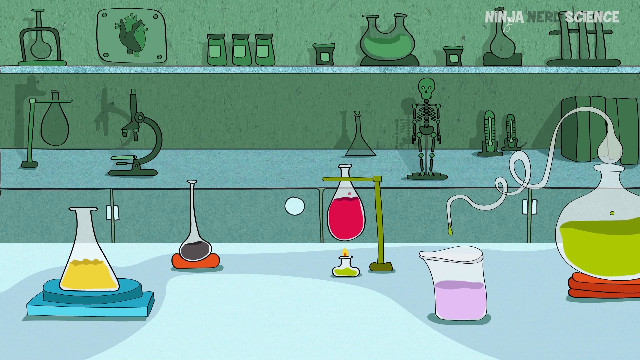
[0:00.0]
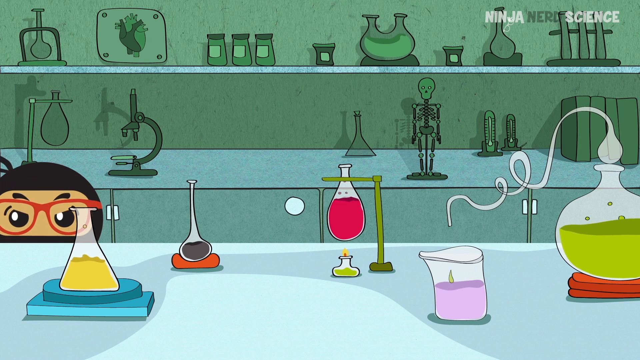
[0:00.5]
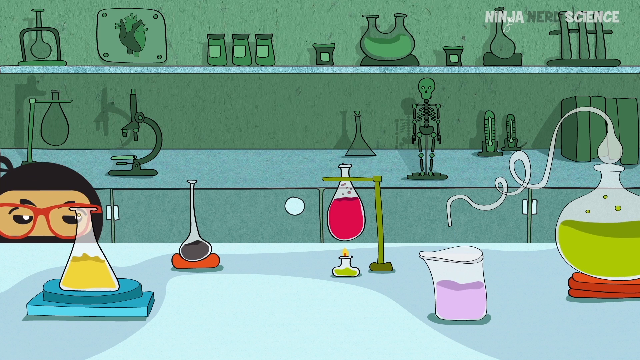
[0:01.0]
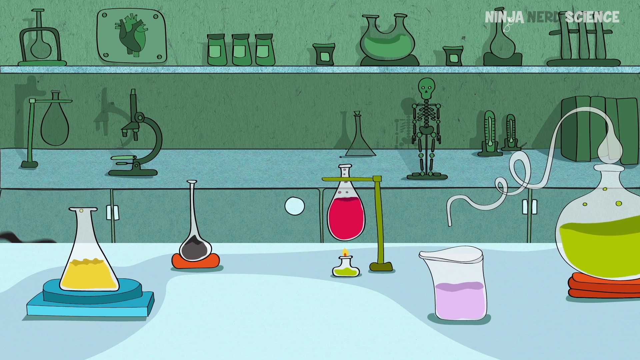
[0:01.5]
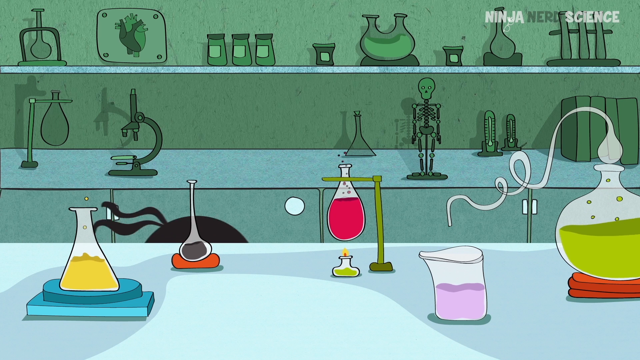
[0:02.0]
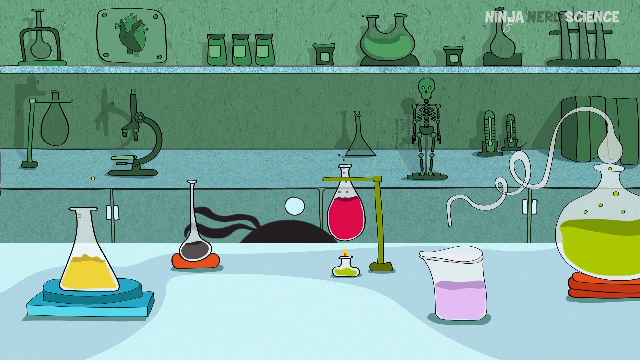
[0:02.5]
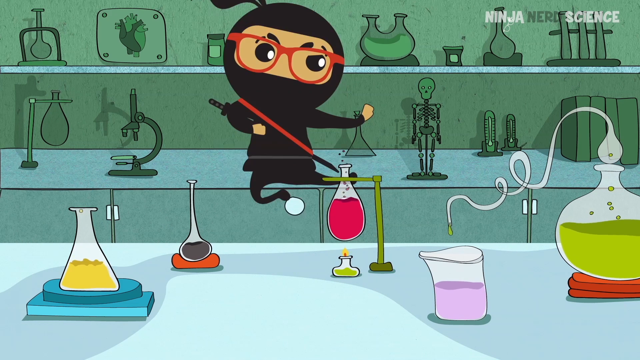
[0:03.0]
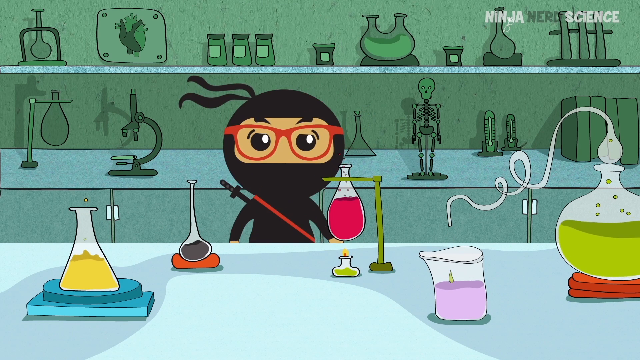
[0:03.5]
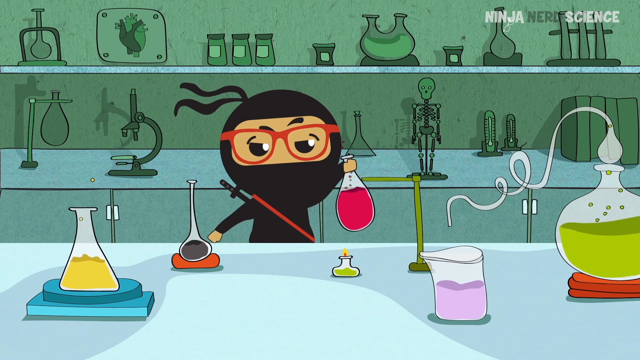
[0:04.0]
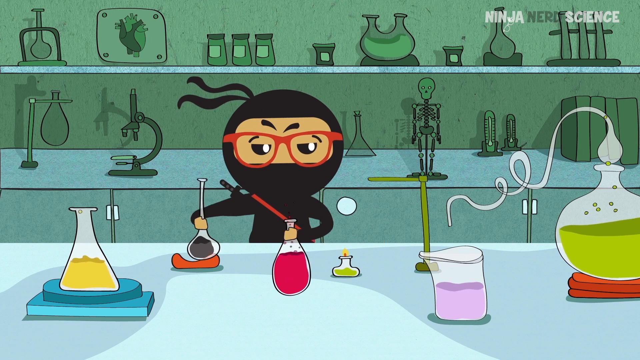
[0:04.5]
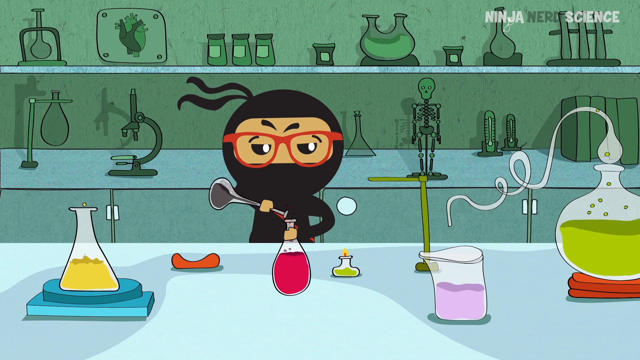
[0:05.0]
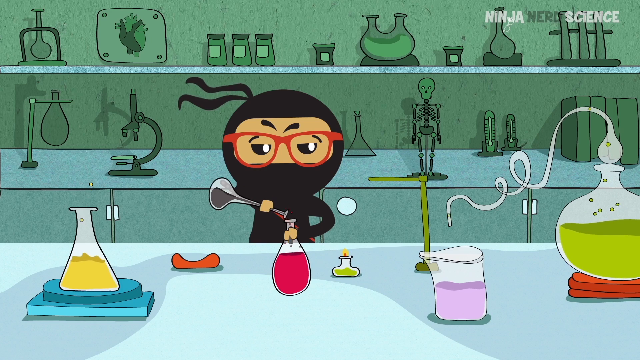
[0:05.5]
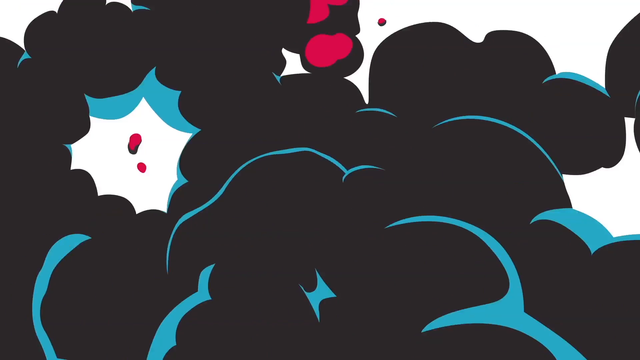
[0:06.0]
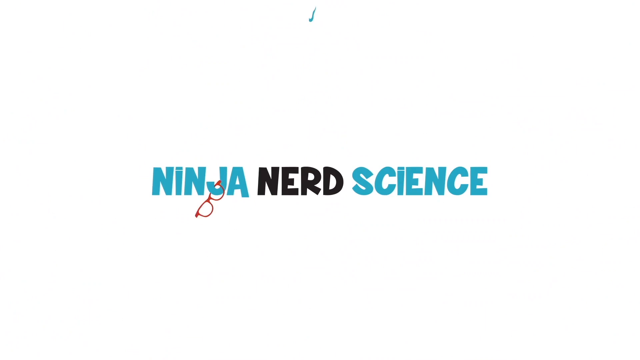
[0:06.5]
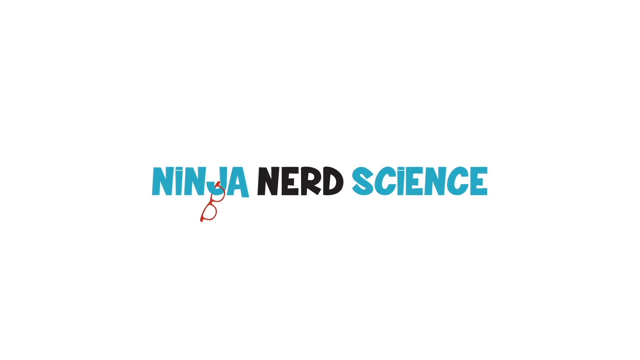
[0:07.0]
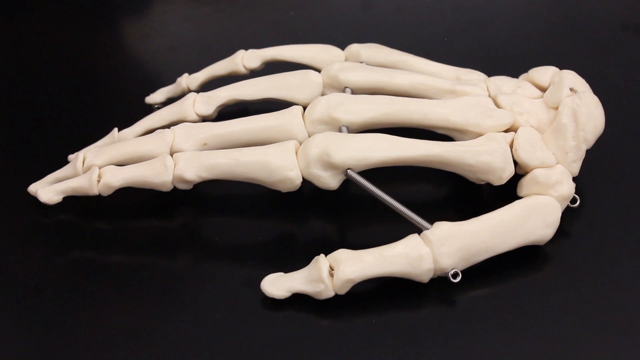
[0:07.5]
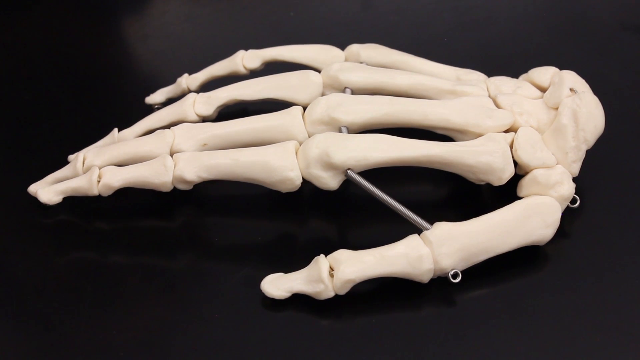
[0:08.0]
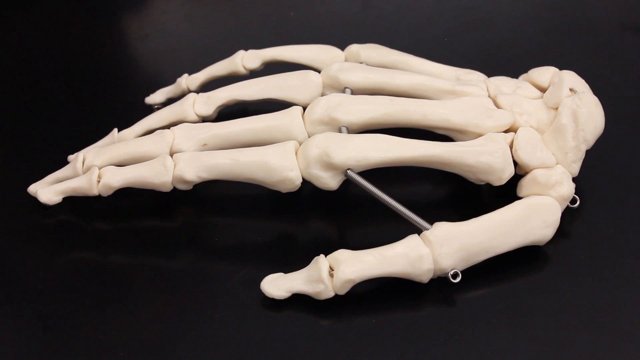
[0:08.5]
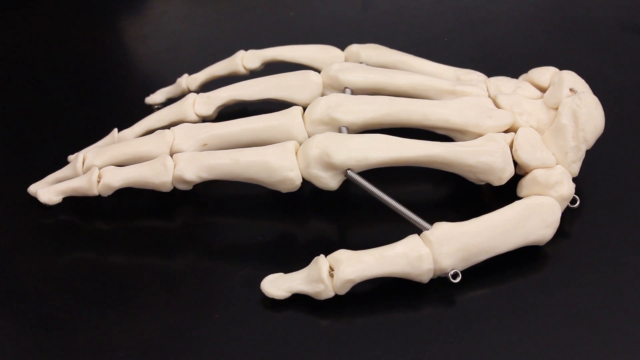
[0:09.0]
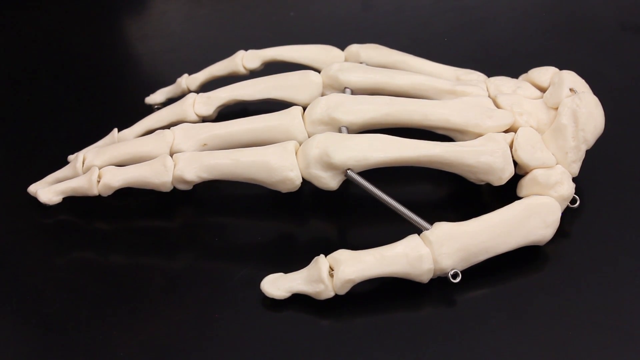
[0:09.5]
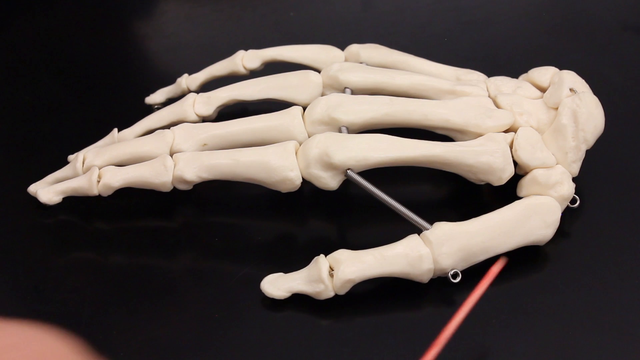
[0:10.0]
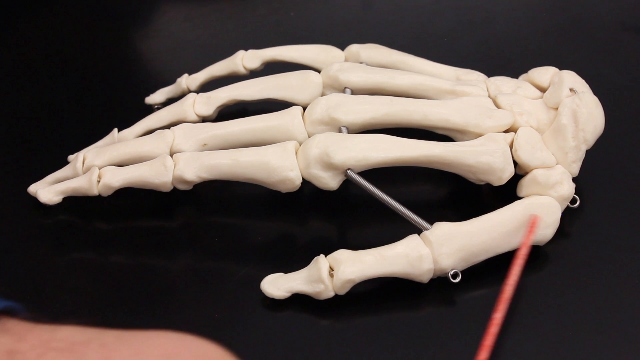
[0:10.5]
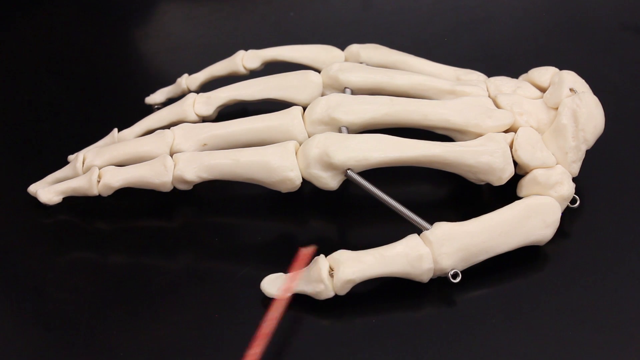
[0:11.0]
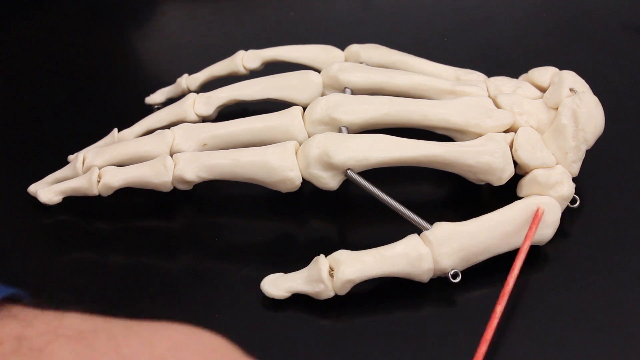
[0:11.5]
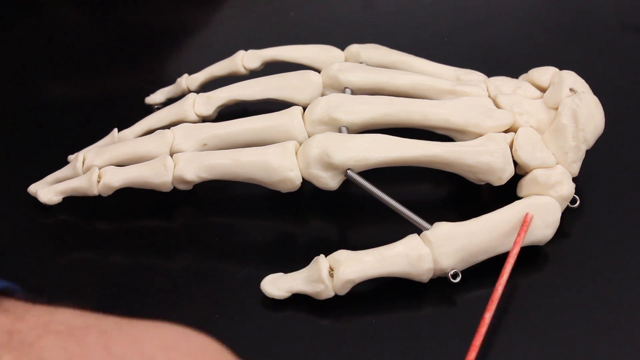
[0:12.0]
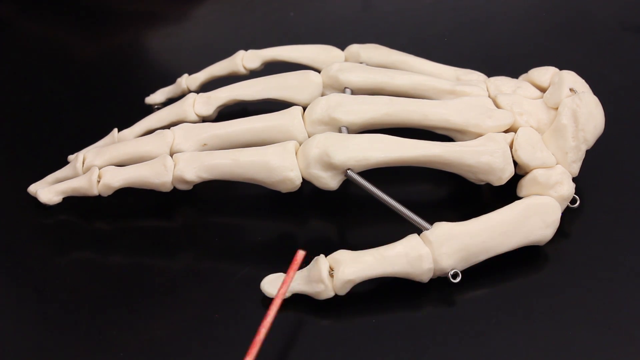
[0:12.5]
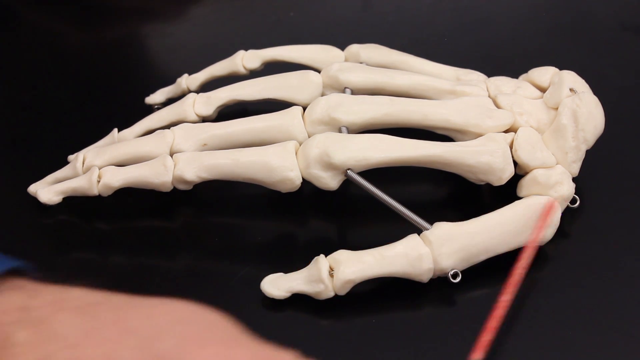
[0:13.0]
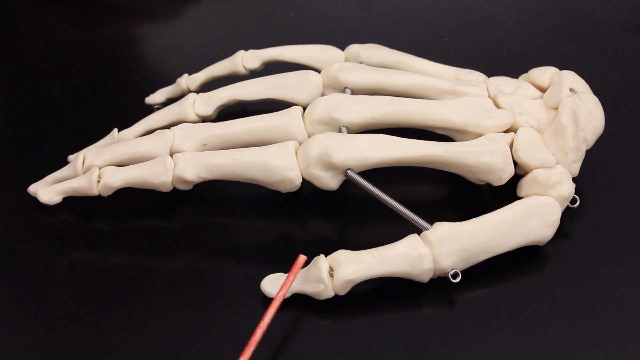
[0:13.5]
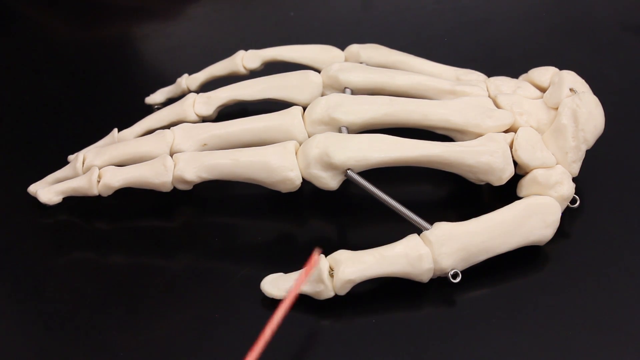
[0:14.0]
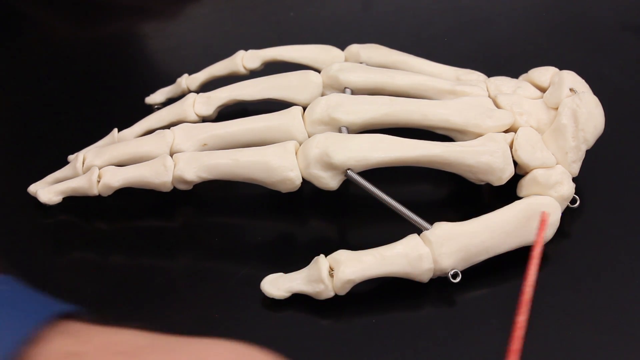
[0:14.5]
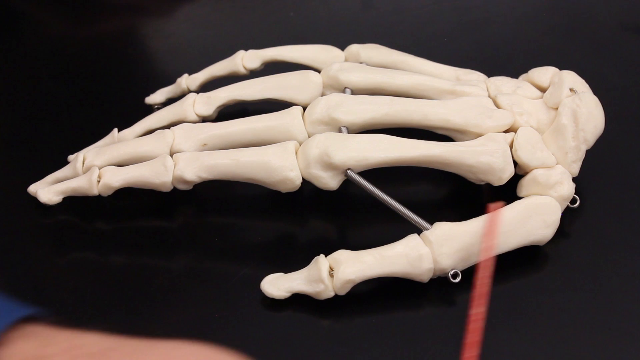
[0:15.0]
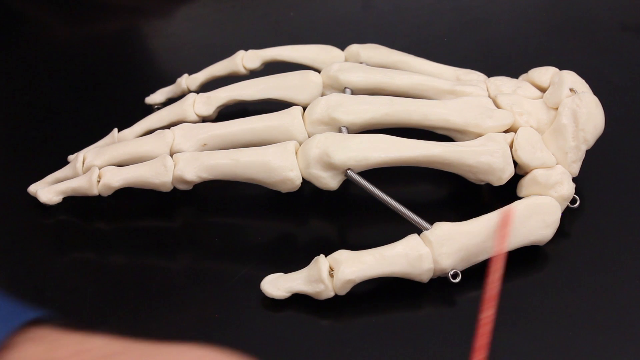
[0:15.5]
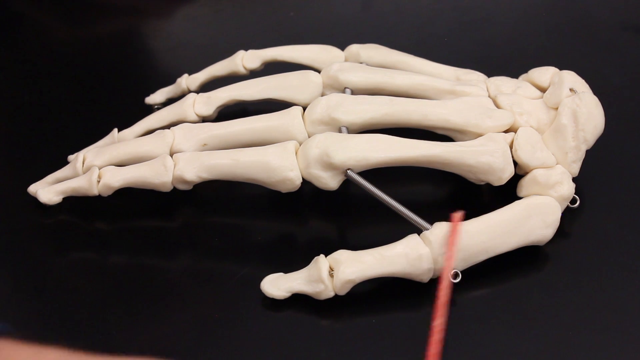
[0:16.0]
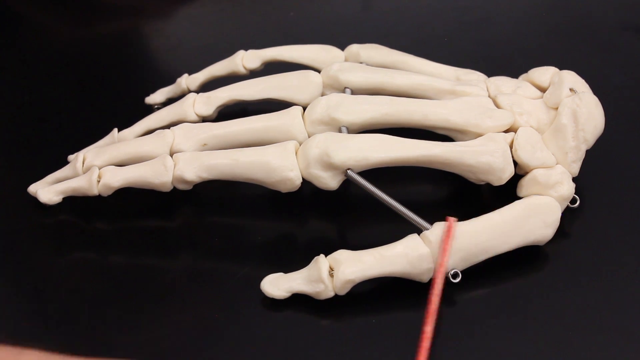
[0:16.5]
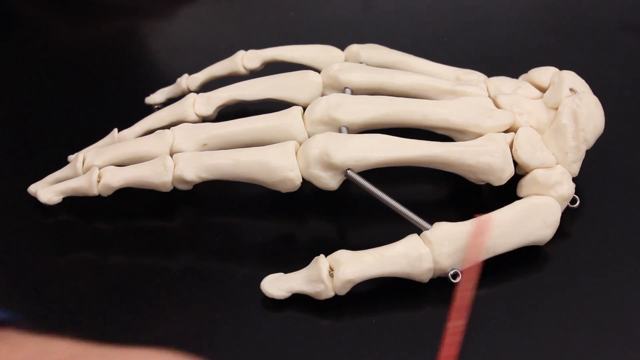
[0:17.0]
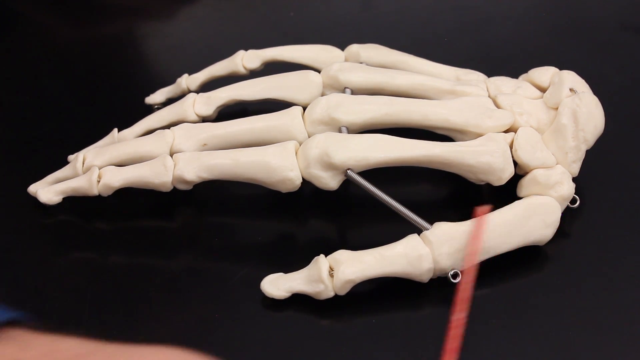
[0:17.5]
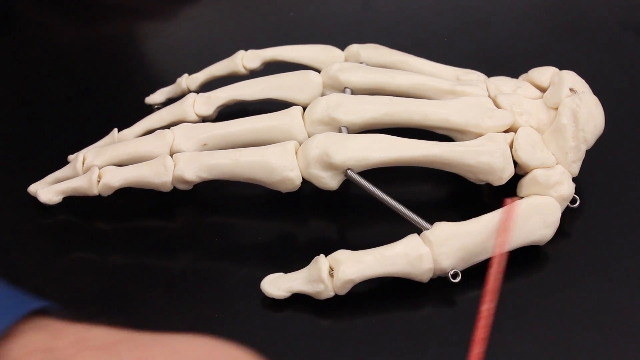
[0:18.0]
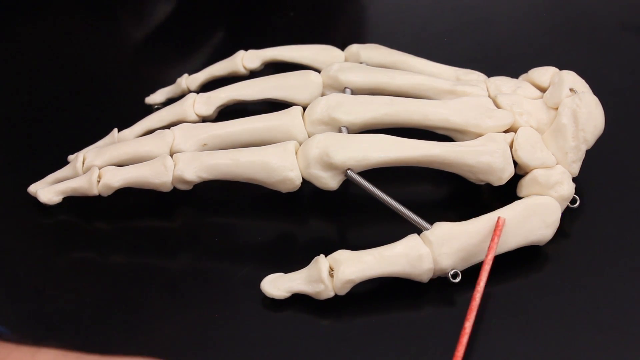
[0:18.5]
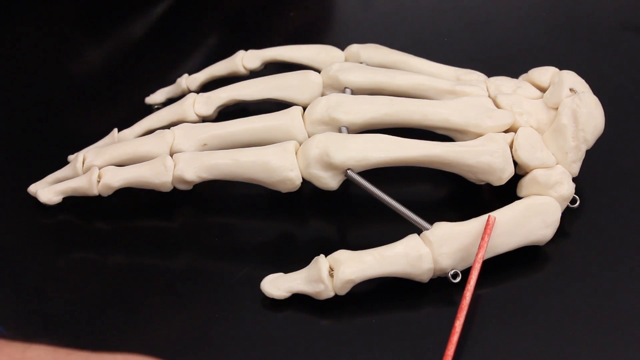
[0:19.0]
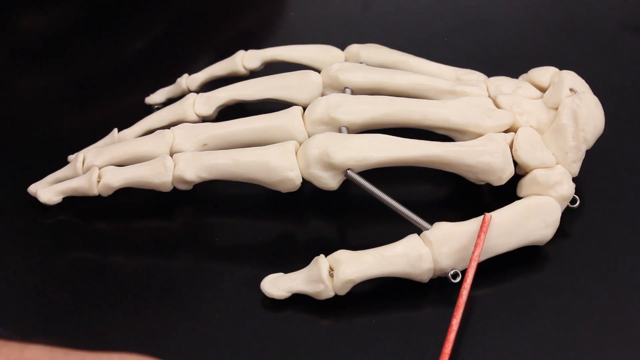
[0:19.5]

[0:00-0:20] The video opens on a cartoon drawing of a lab. In the foreground is a workbench with multiple flasks, a Bunsen burner, and similar lab tools. In the background are two shelves holding various scientific tools, such as a flask, a flask holder, various jars, a model skeleton, thermometers, books, and a microscope. A young person's head comes up from behind the workbench, revealing a ninja wearing red-framed glasses, with a katana on their back and a red sash around their shoulder. With the hand on the viewer's right they pick up a flask of red liquid, and with their other hand they pick up a flask of black liquid. They start pouring the black liquid into the flask with the red liquid, and a large black and blue cloud appears as if exploding, sending their glasses flying up to the sky. A title card reading "Ninja Nerd Science" appears, and the glasses fall down and hook onto the J in the word "ninja". The video then transitions to a photograph of a model human hand showing the bones, which are connected with solid metal rods and hooks at the edges of the bones. A pink stick comes in from the bottom of the screen and points toward the thumb section of the hand. The hand of the person holding the pink stick is visible in the bottom left corner as they move the stick up and down the thumb bones.